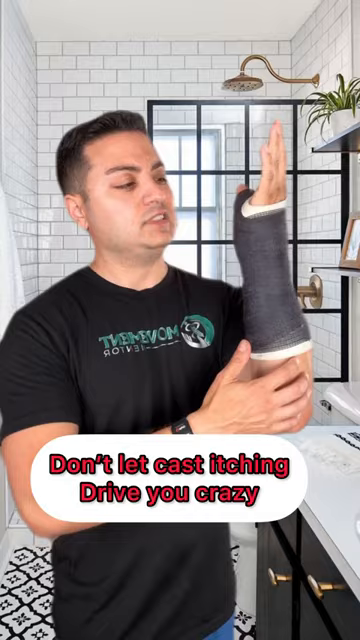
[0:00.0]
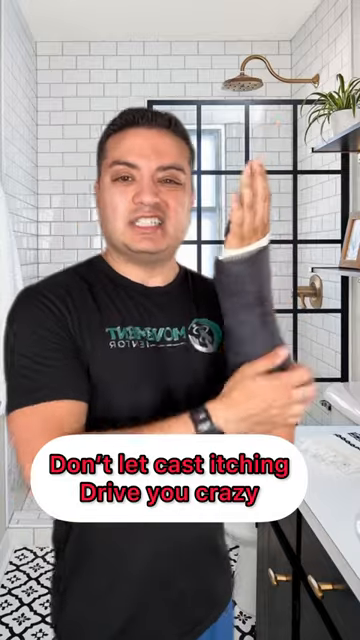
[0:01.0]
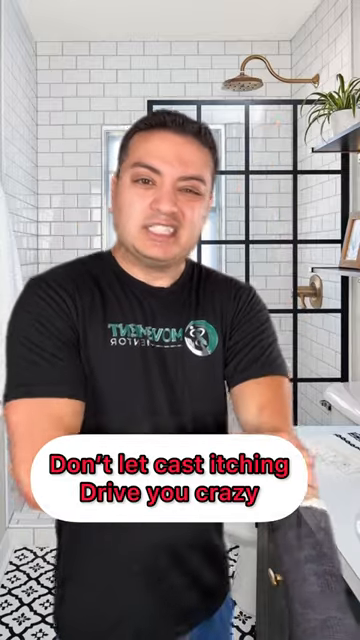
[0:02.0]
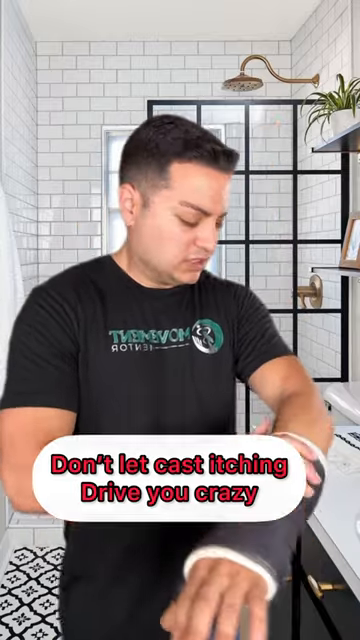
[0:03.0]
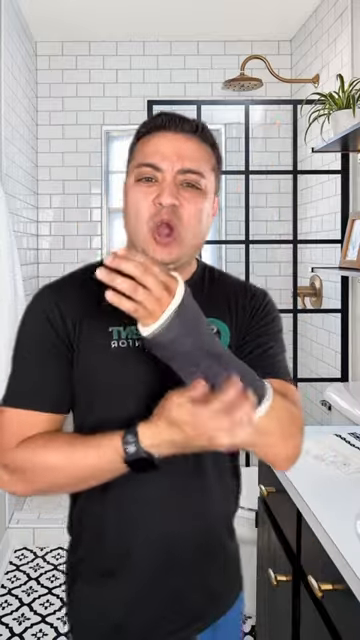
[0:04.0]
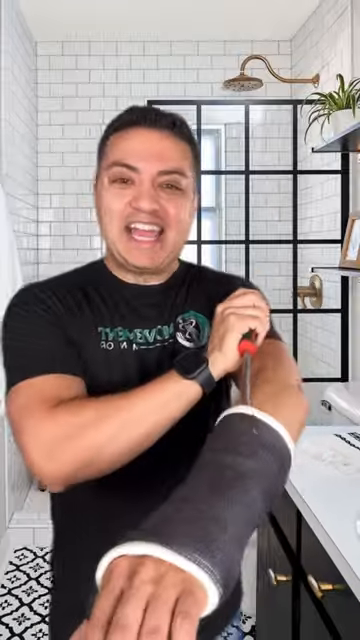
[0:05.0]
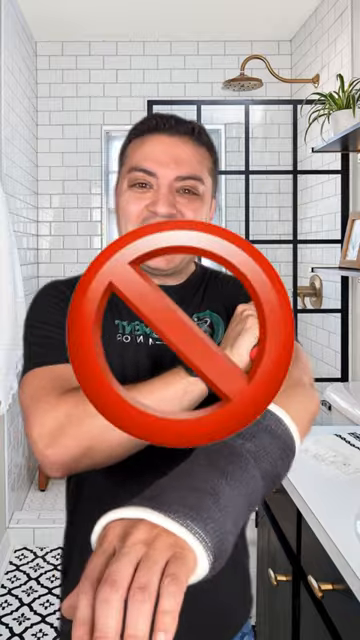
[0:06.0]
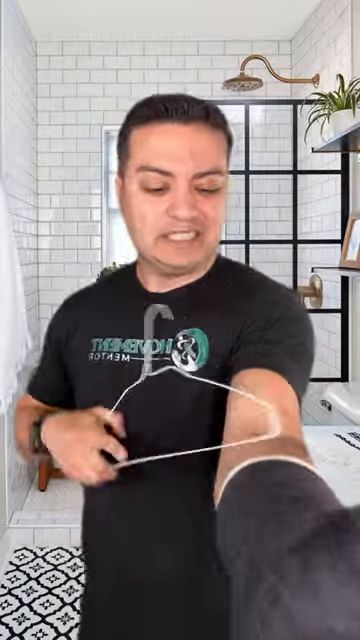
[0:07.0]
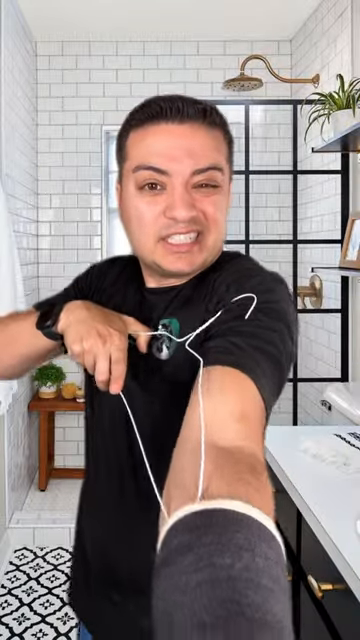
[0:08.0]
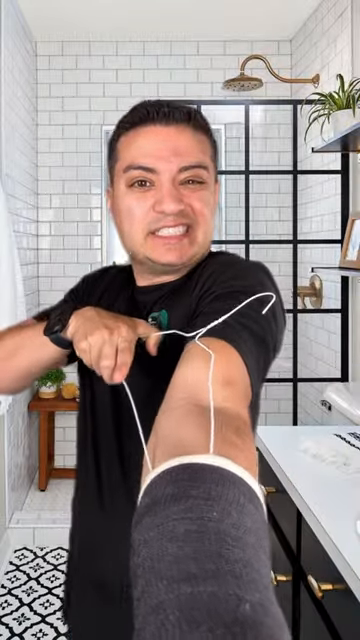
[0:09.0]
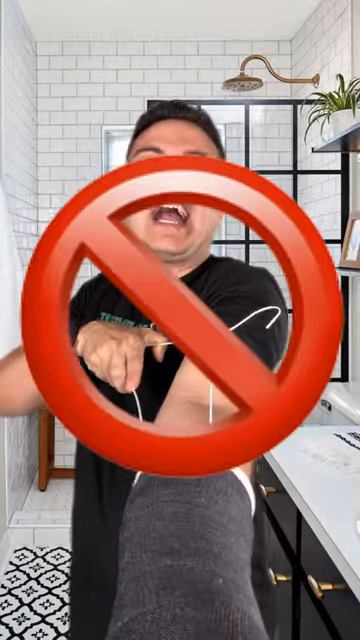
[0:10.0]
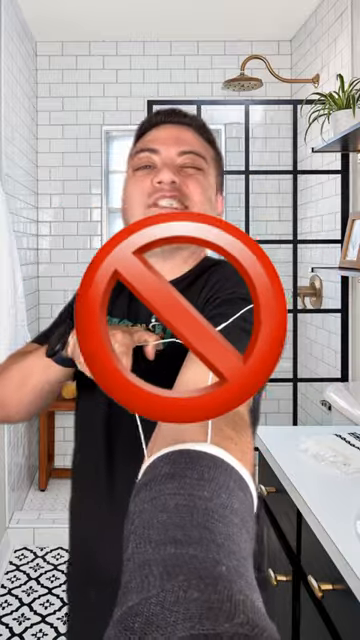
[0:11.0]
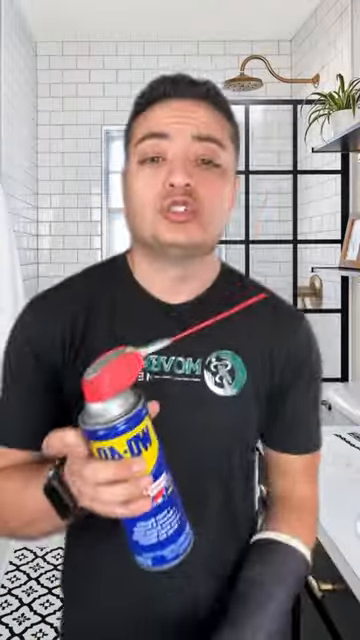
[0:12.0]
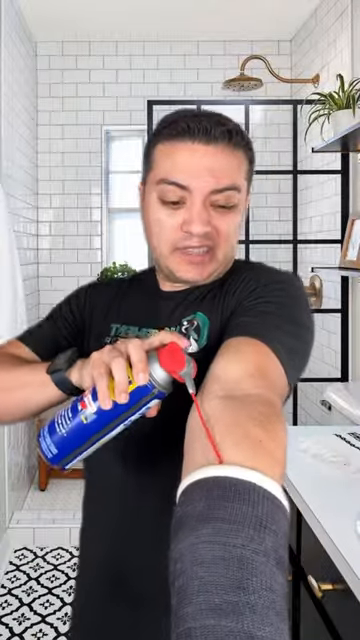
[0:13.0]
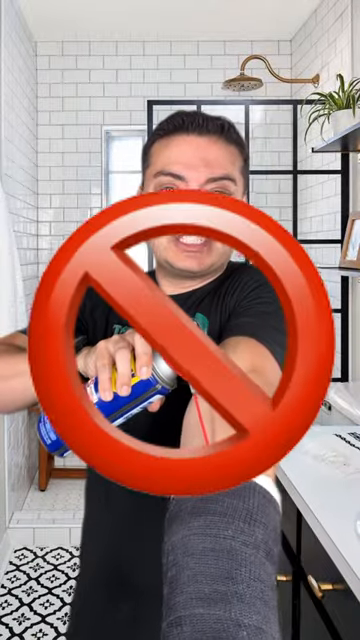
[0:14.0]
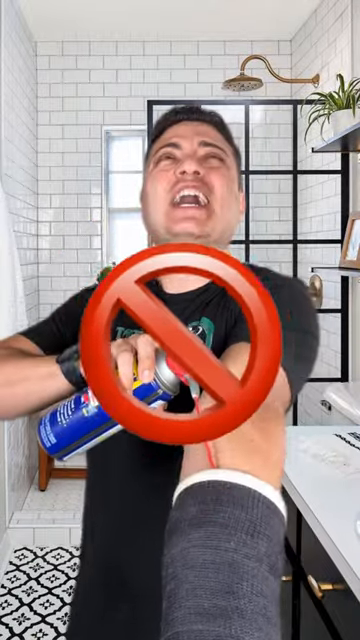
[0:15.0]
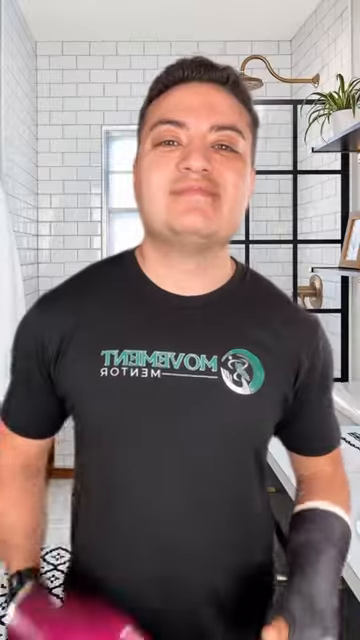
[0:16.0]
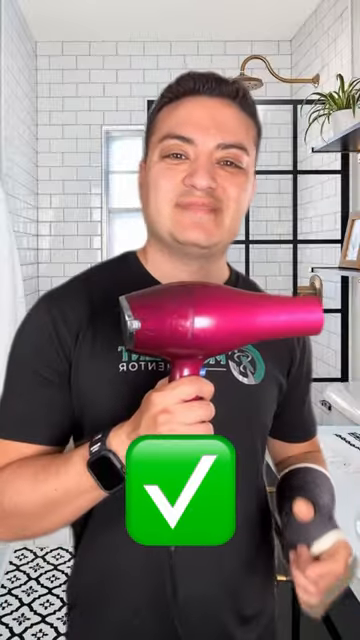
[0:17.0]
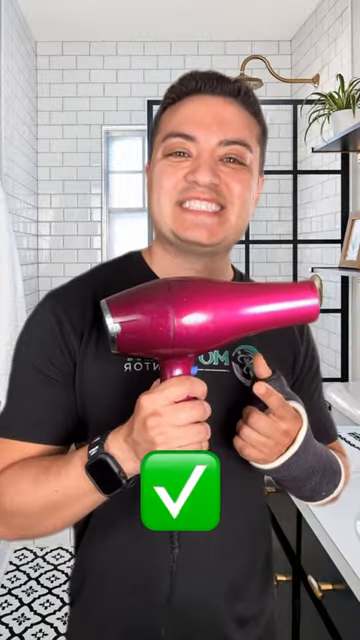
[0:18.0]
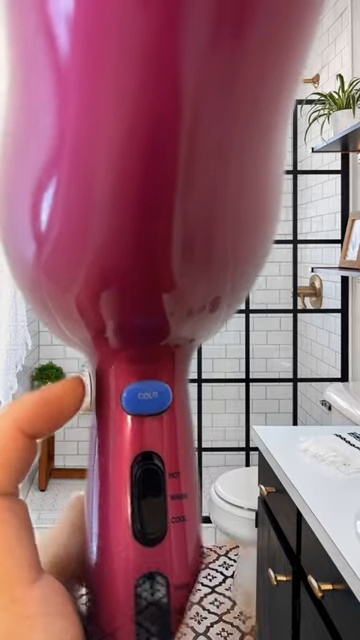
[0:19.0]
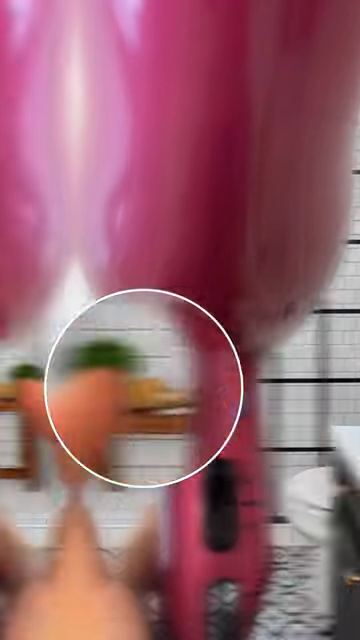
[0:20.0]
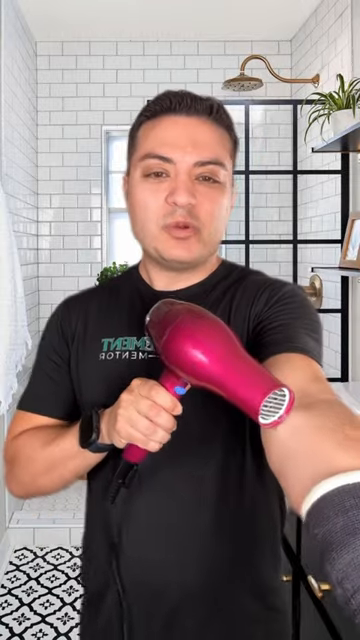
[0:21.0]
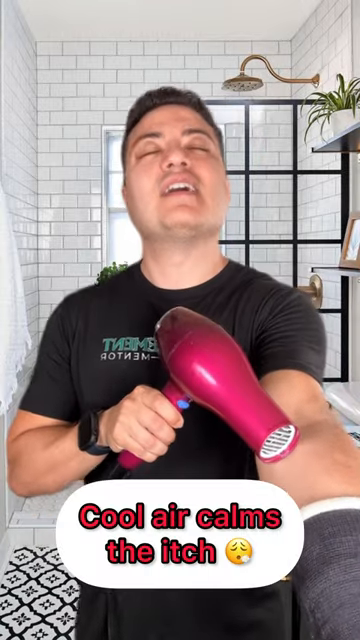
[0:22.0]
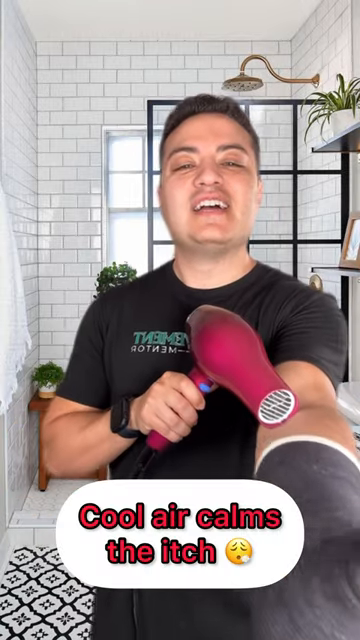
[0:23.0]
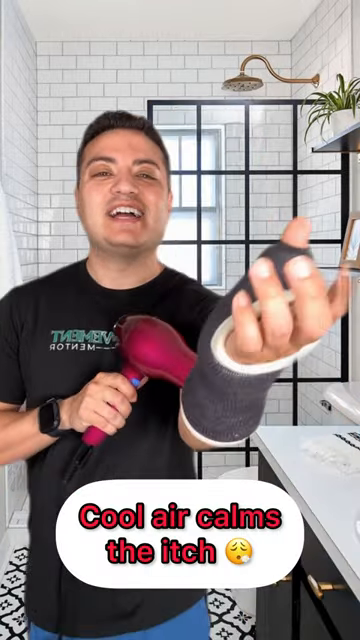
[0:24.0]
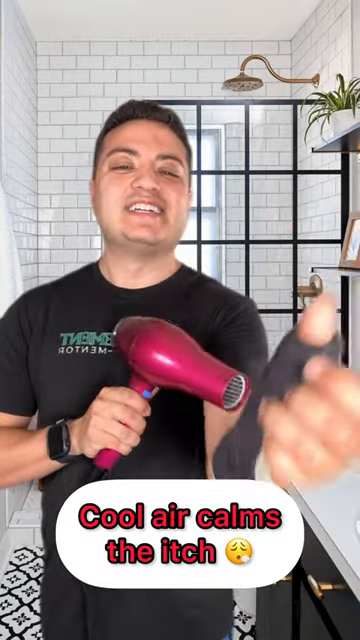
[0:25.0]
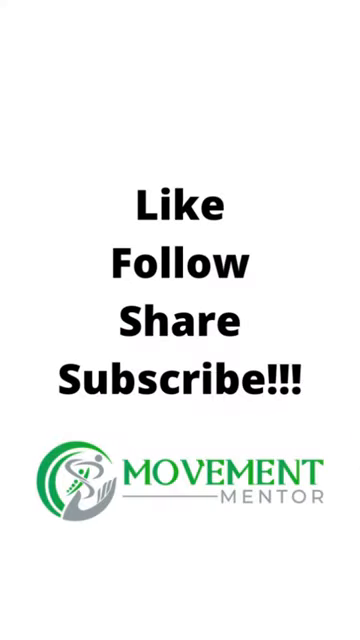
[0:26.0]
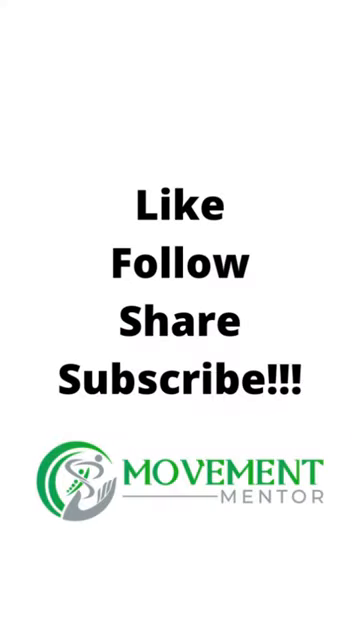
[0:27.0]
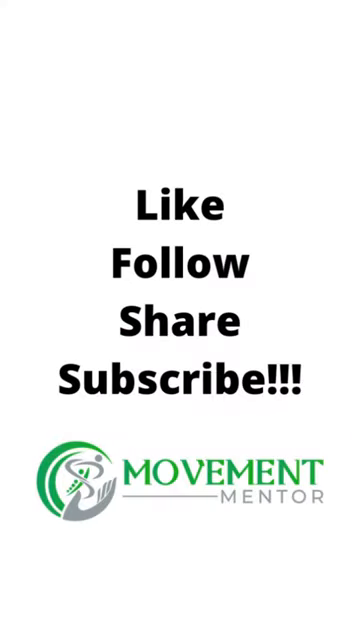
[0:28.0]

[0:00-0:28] A man has a cast on the lower part of his arm and appears to have an itch he cannot reach. He scratches on the outside of the cast, but it does not work, so he tries all different ways to get at the itch. He tries to stick a coat hanger down his cast, which does not work well. He then uses what looks like a long screwdriver, trying to go down the cast and scratch the itch. Next he holds a can of WD-40 and tries to stick its long needle nose down the cast to help the itch, and then he takes a hair dryer to the cast to try to calm the itch. Nothing works, and he gets very frustrated. He wears a black t-shirt with some writing across the chest, and he keeps trying to scratch and calm the itch.